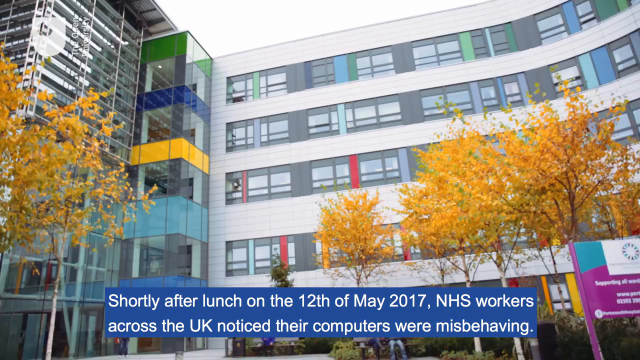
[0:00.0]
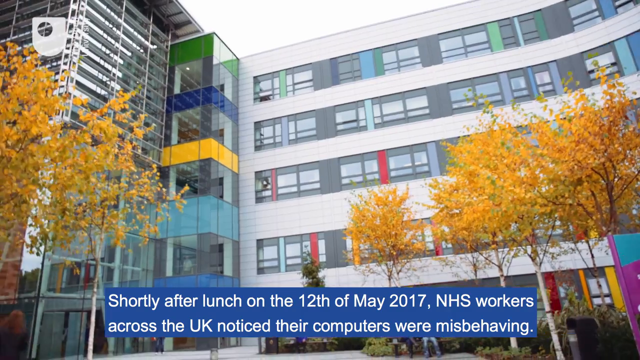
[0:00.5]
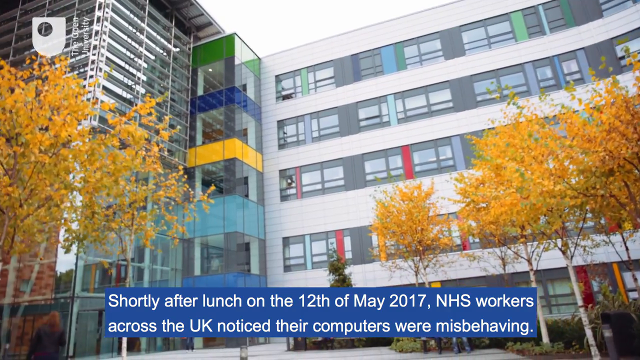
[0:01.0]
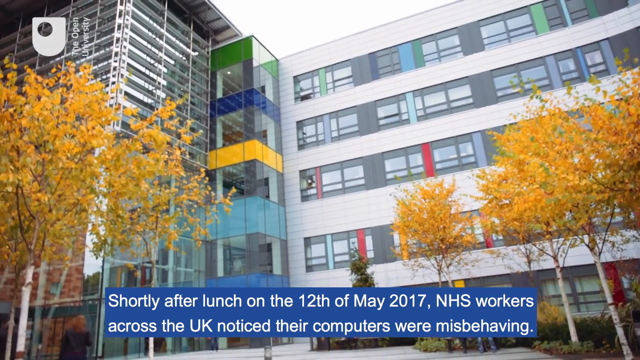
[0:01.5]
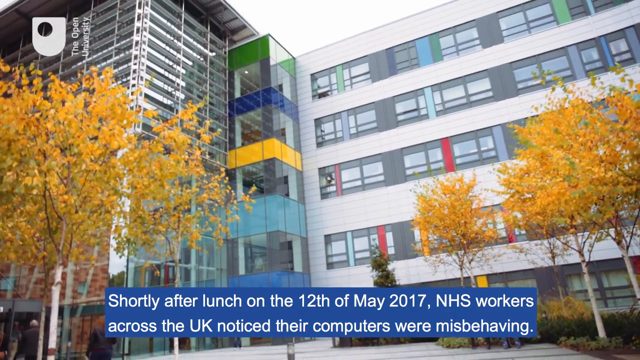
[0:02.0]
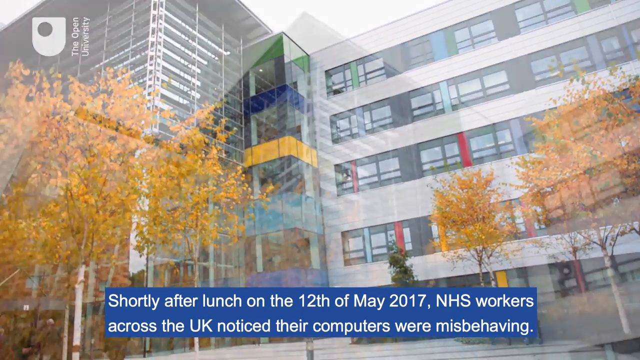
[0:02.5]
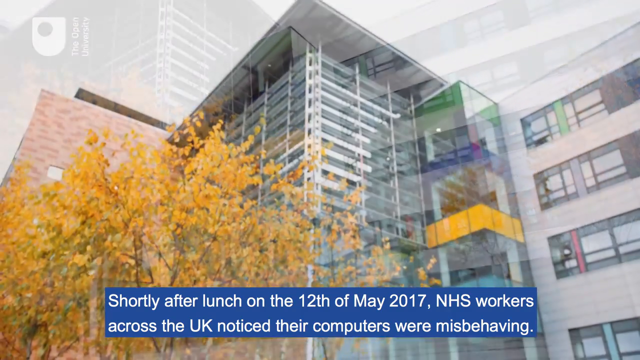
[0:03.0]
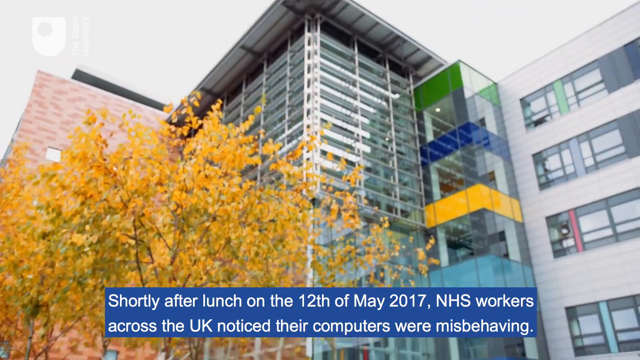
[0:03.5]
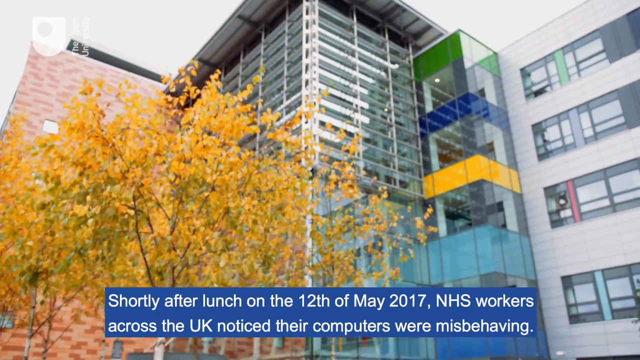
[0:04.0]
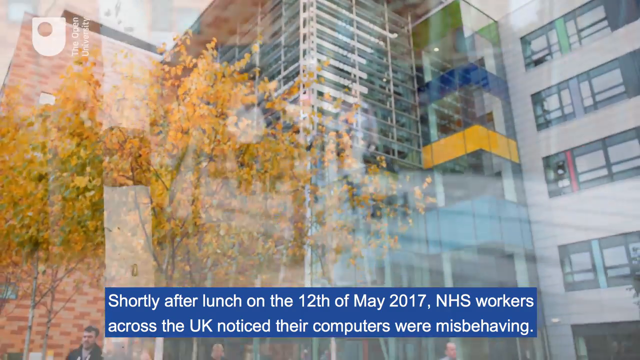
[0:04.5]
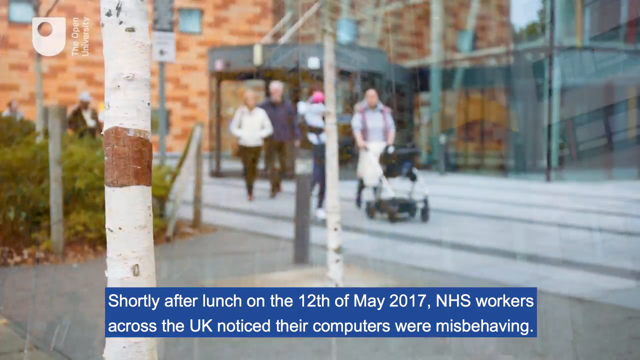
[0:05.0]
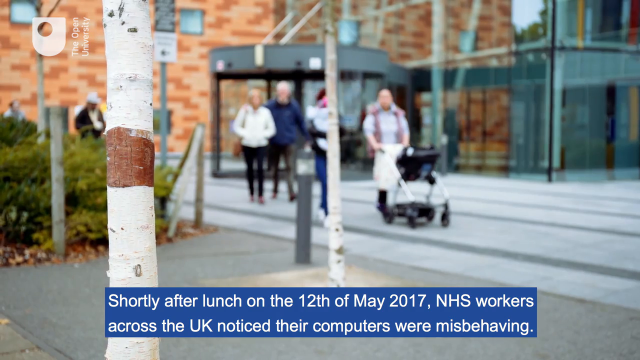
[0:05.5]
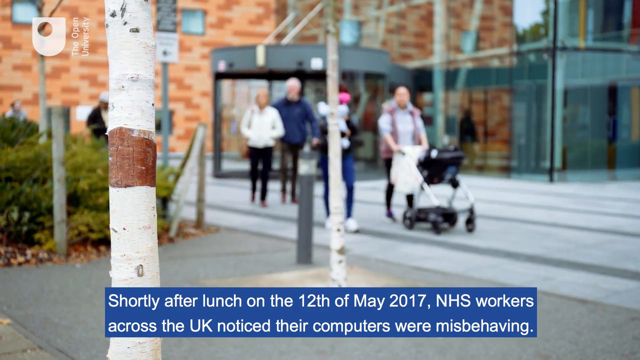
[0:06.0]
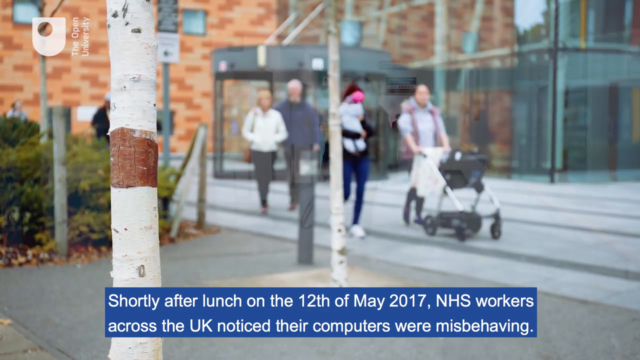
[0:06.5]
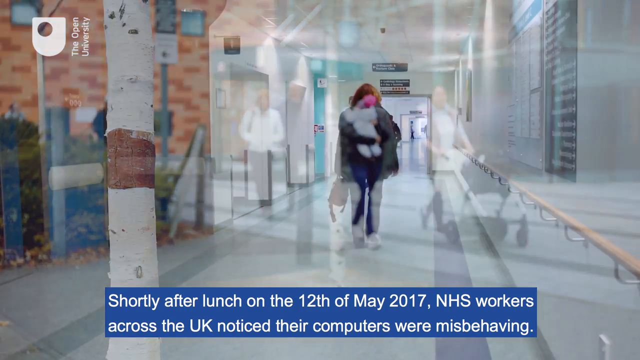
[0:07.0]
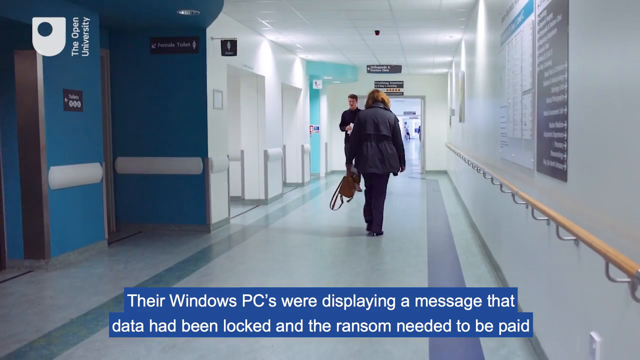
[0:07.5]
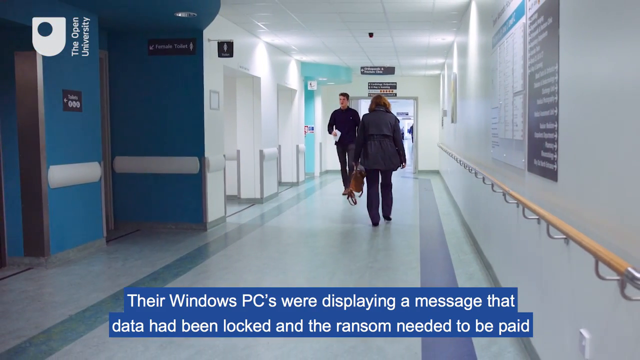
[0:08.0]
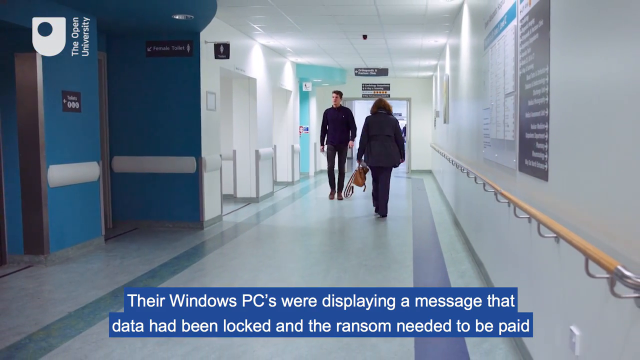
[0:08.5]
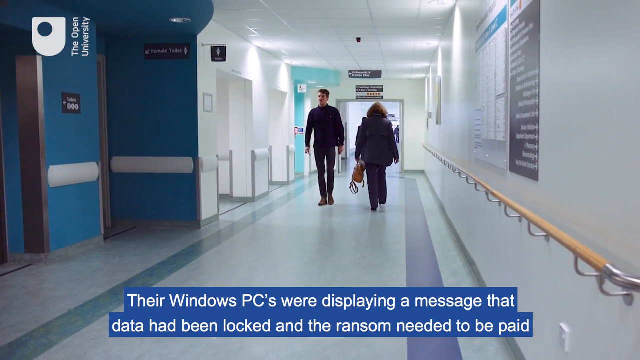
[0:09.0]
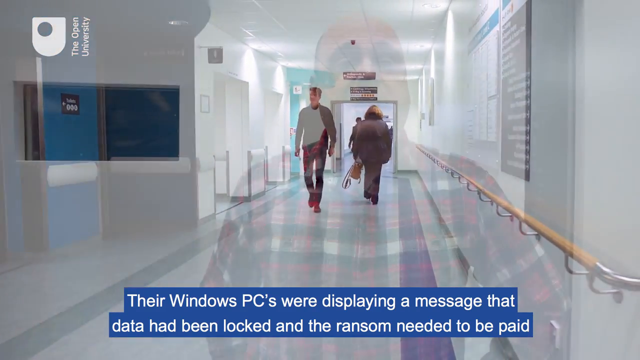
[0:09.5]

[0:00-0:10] A futuristic/modern-looking building appears, with lots of vibrant colors such as green, teal, and light blue windows shown prominently across the building's elevator and its window panes. A subtitle then appears at the bottom of the screen with a blue background and white lettering reading "Shortly after lunch on the 12th of May 2017, NHS workers across the UK noticed their computers were misbehaving." A cut follows, then a similar panning cut, before pedestrians are shown walking down the street. New wording appears on screen as two individuals walk down a hospital hallway: a man carrying what appears to be a bag of some sort and a woman carrying her purse.